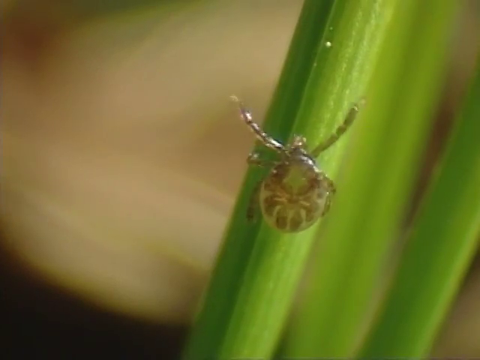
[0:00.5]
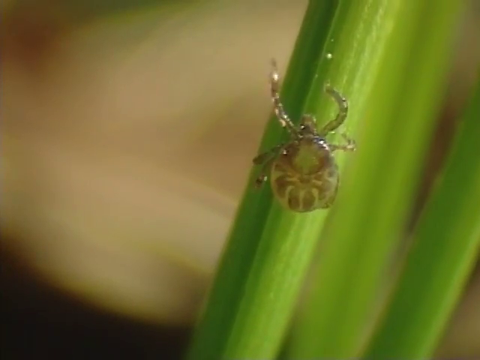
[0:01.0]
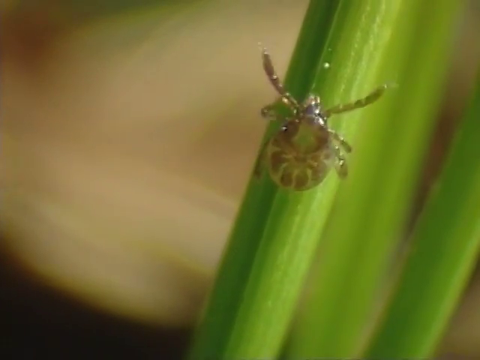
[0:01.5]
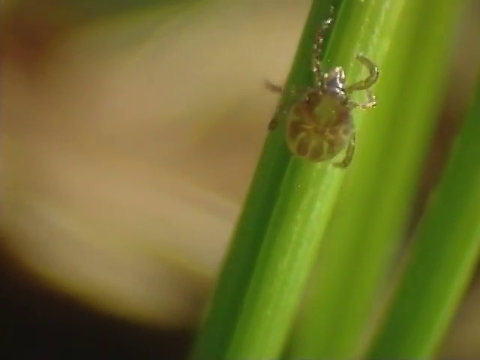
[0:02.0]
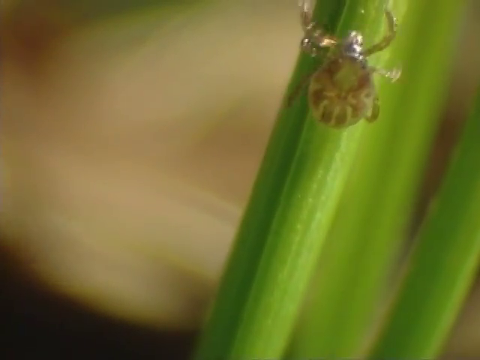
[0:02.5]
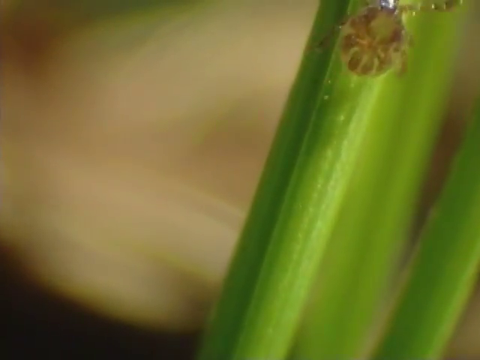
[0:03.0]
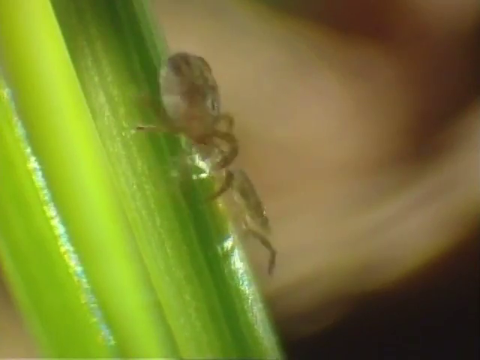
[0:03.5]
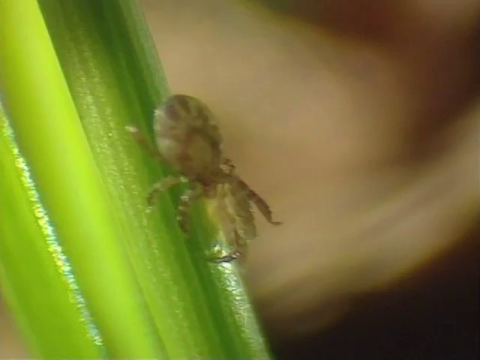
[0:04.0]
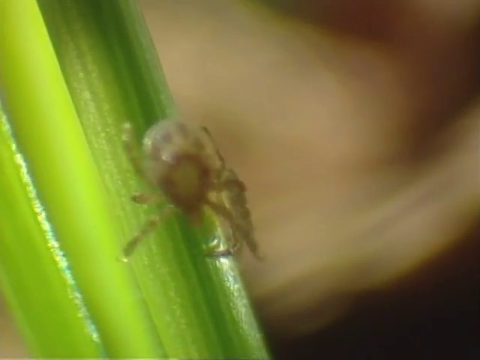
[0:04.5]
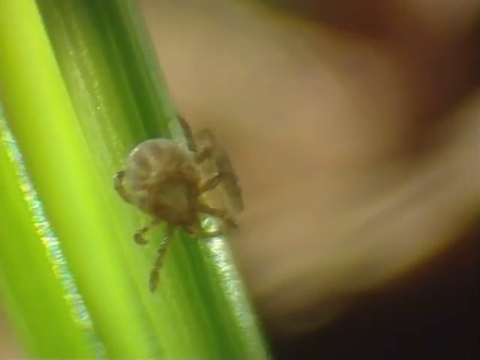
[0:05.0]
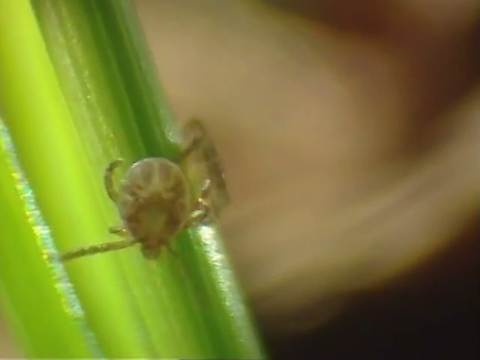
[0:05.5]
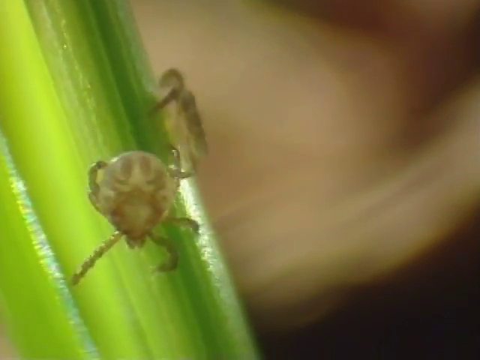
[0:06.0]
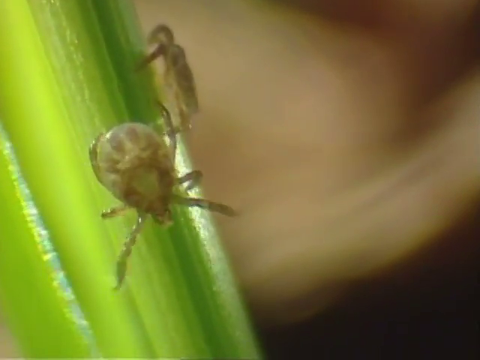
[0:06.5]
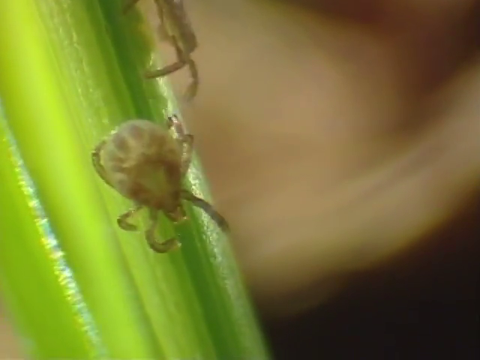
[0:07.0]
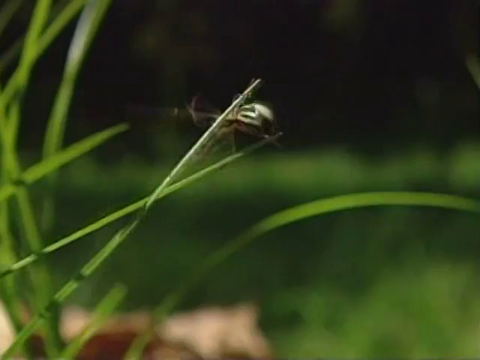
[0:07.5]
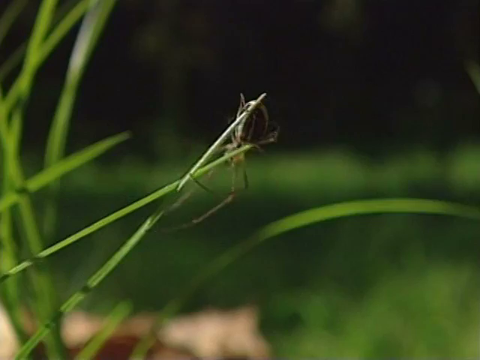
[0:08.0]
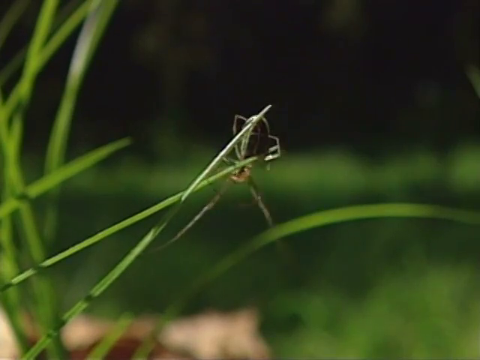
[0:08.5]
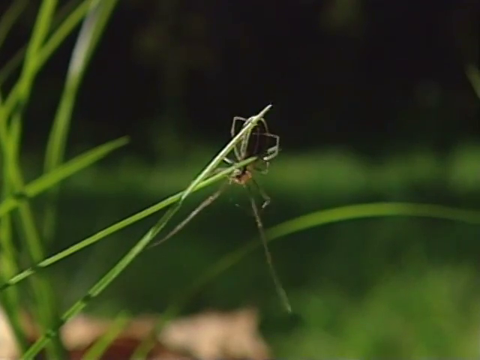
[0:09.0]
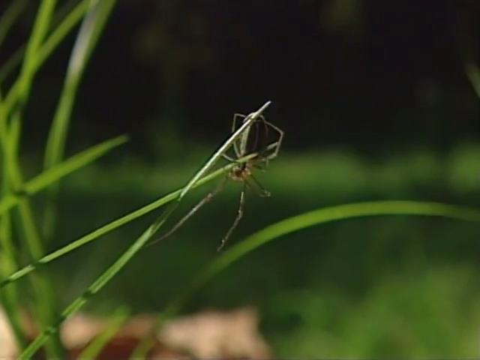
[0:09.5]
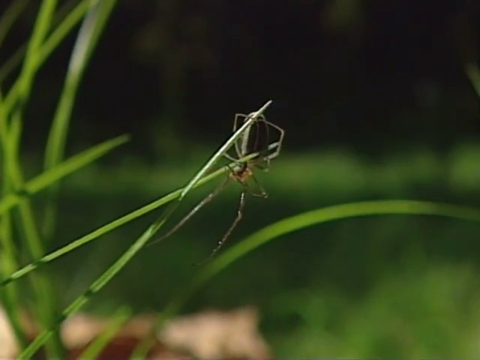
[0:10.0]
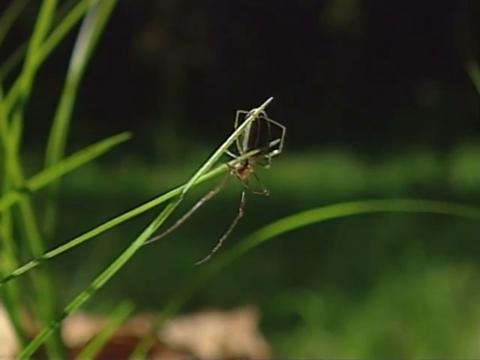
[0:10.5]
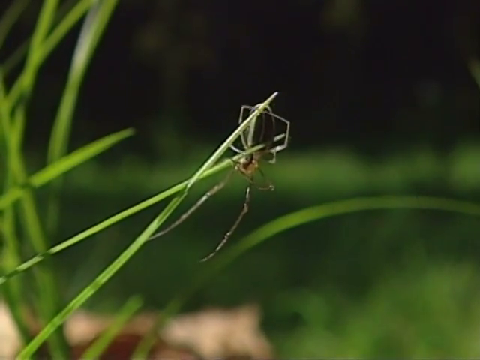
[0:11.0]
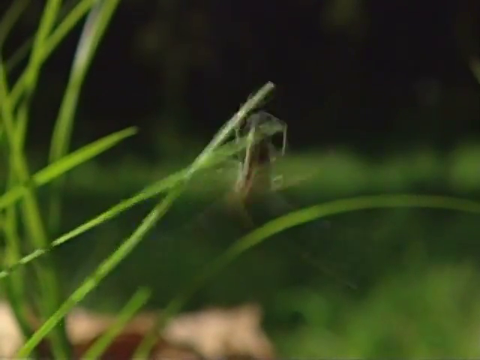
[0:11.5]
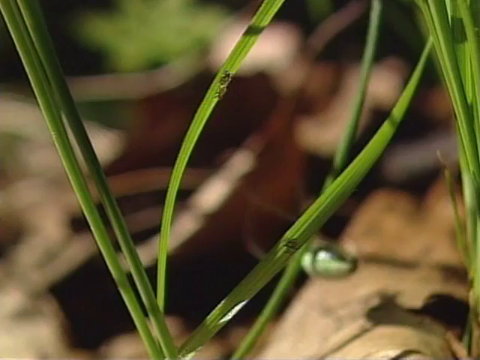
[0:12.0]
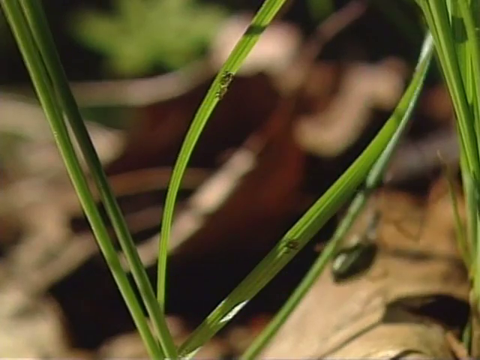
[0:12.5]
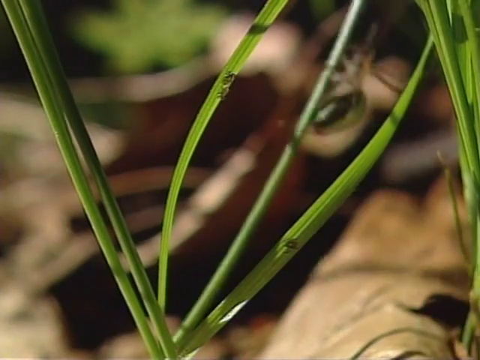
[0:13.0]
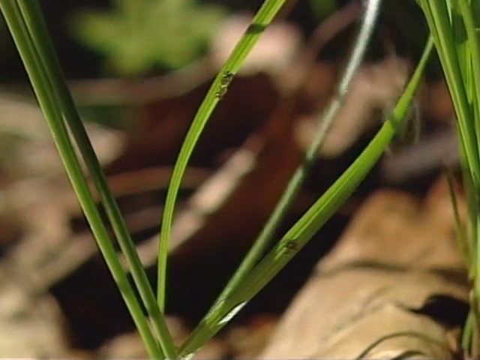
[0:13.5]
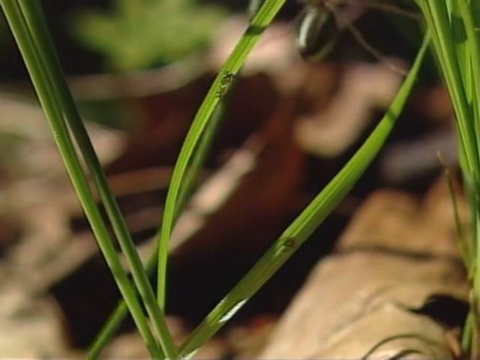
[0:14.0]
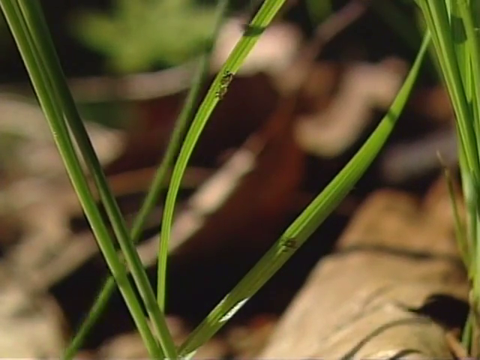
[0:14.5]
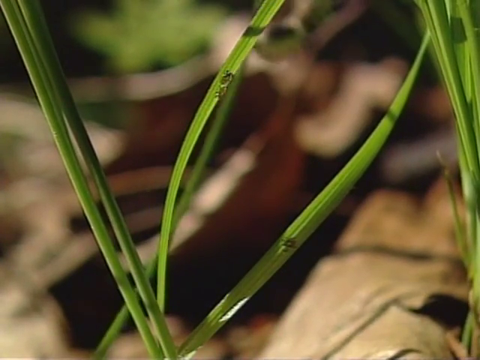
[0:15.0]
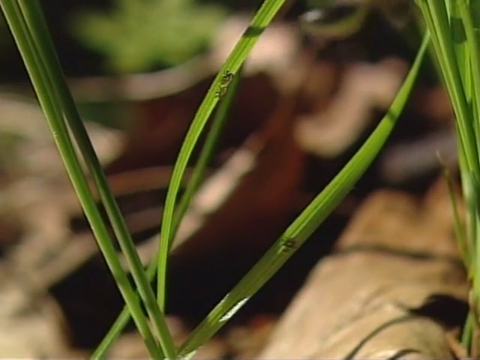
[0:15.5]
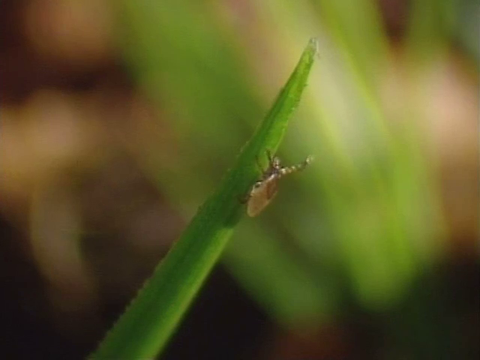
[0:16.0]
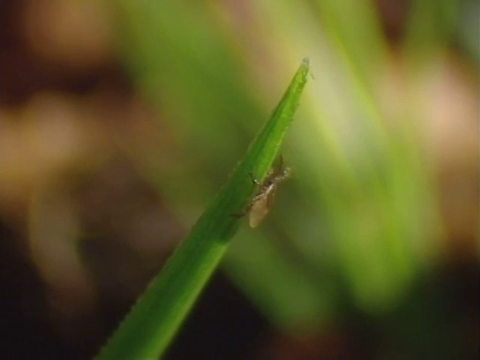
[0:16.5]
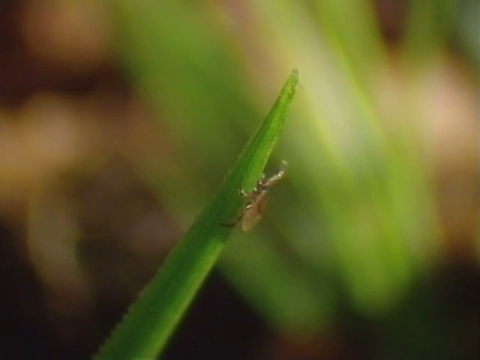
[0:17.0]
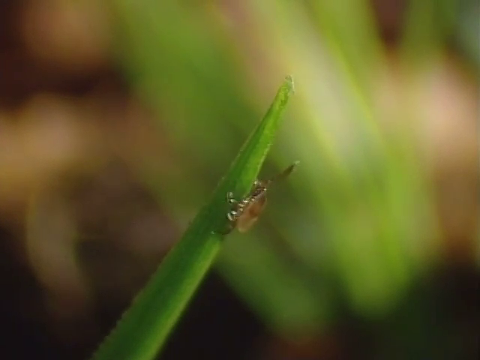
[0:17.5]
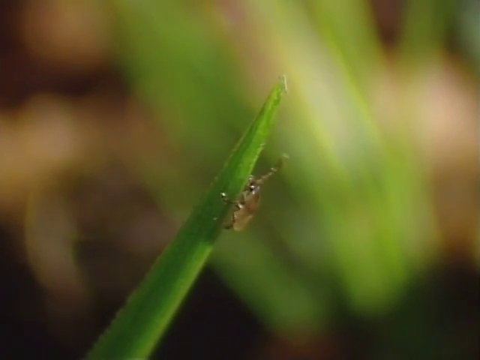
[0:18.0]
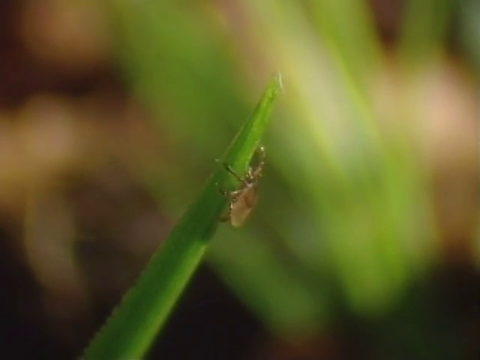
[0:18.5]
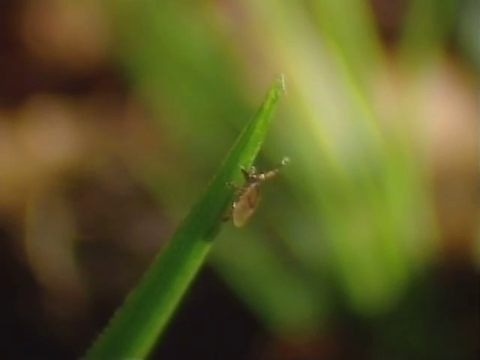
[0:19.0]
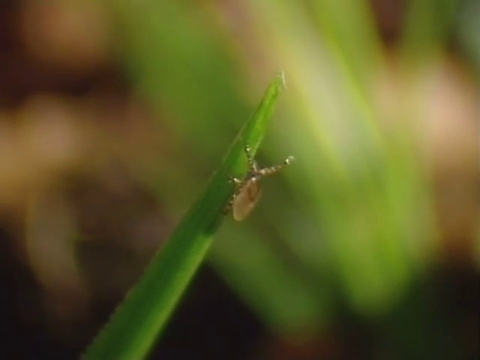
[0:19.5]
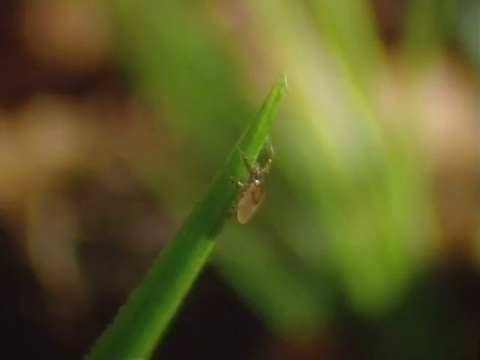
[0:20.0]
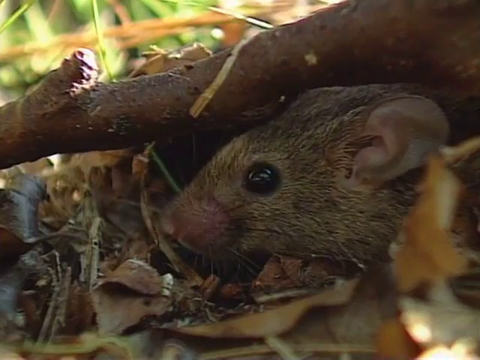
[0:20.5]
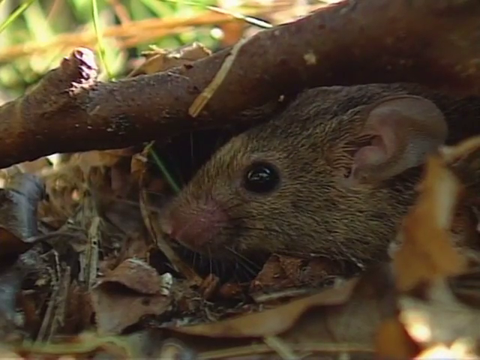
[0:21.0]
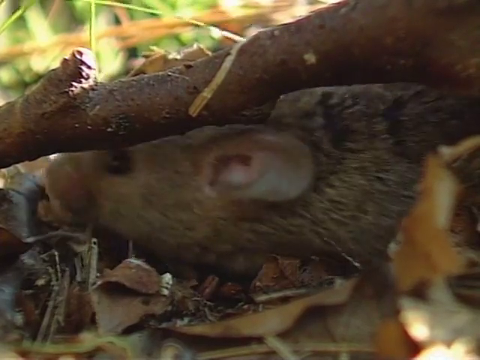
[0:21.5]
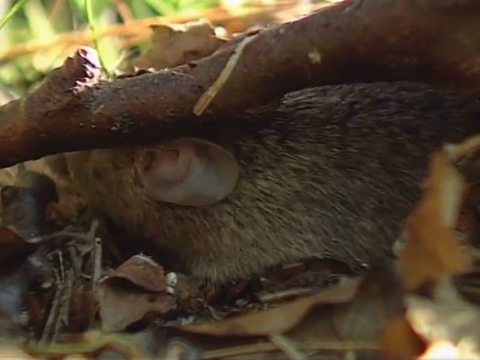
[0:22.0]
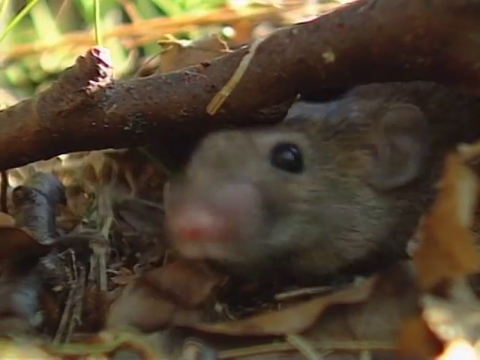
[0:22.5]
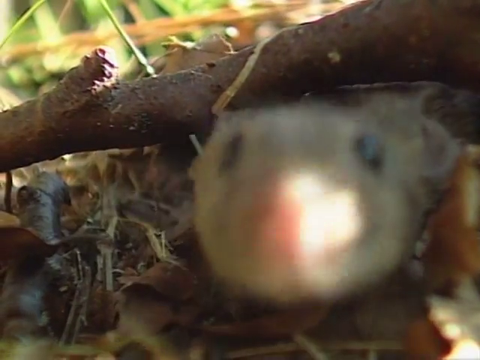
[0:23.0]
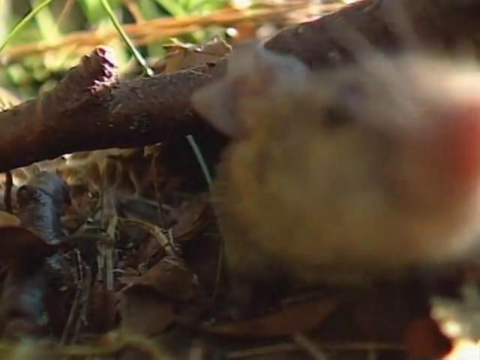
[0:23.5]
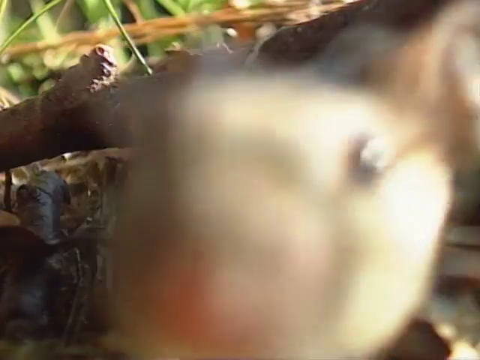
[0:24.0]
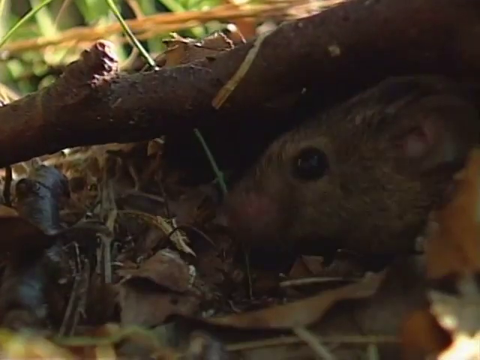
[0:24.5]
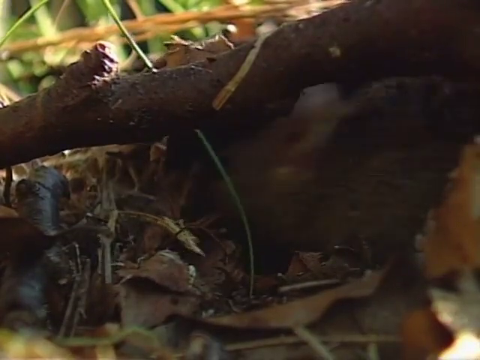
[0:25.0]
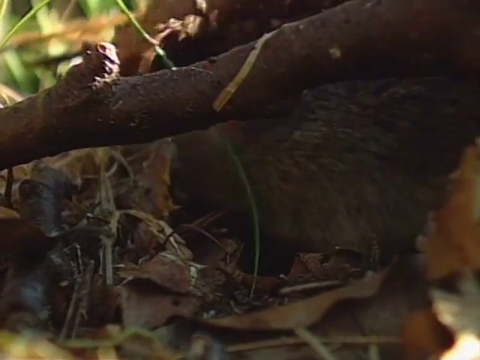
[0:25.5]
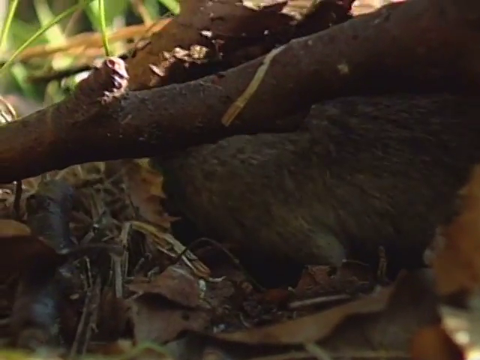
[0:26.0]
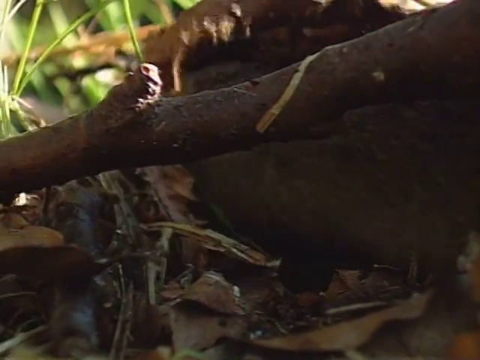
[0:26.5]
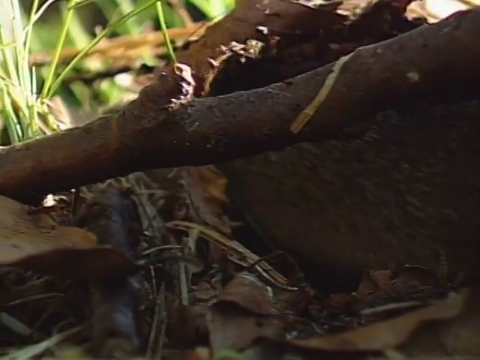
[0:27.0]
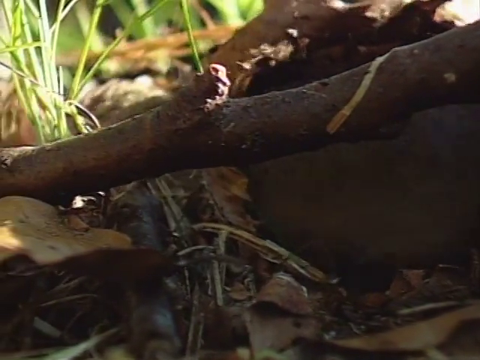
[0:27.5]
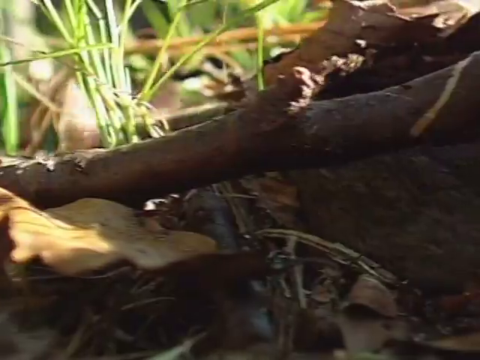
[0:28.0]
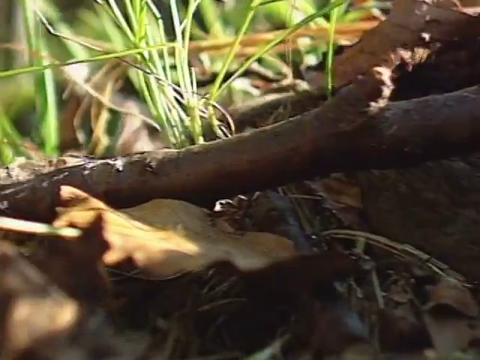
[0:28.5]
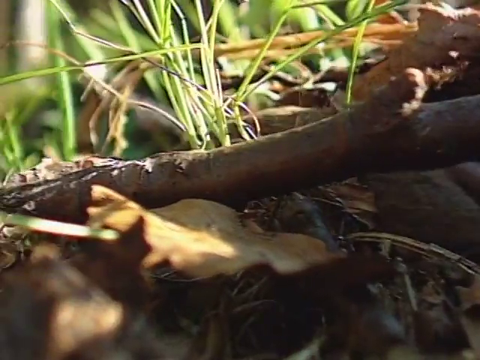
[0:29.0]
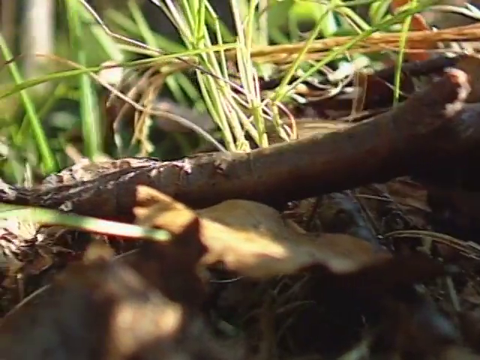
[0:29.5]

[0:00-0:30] In a very close-up view, a tick crawls on what looks like a leaf or a branch. Its features become visible, including its legs and antenna. It looks almost translucent, very small and kind of clear, with a brown pattern on its back. The tick crawls up and down a green stalk. Next, a spider crawls along blades of grass near ticks that are sitting towards the tips of the blades. The scene then shows a rat or mouse crawling and scurrying across the ground. It has a pink nose and beady eyes, and it sniffs through leaves, crawling through grass and dead leaves on the ground.